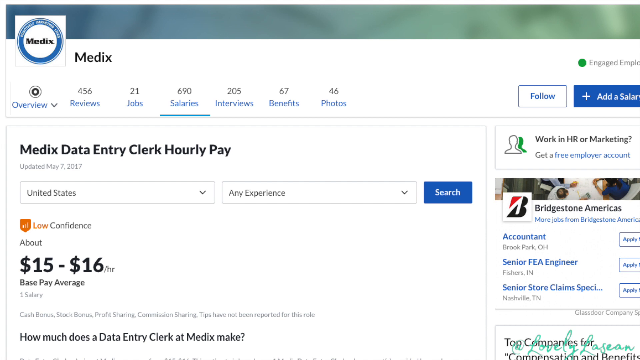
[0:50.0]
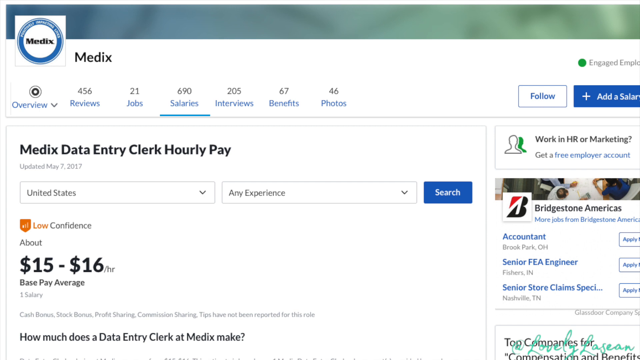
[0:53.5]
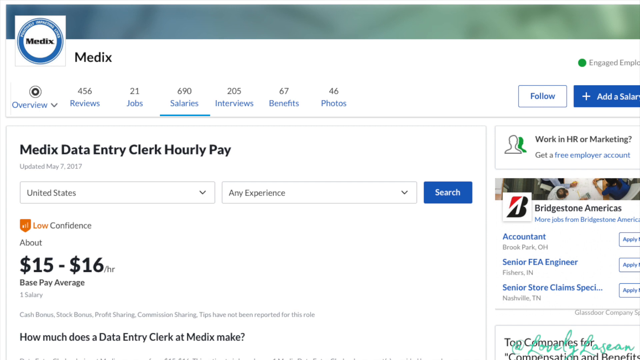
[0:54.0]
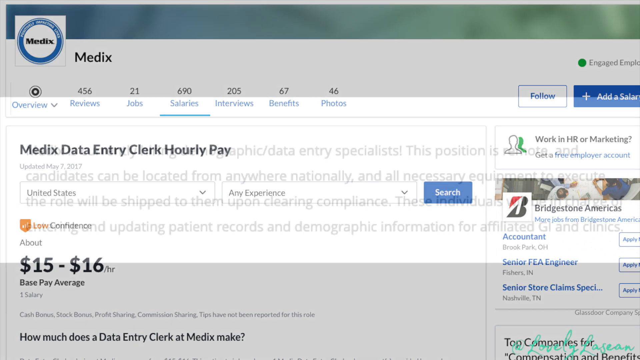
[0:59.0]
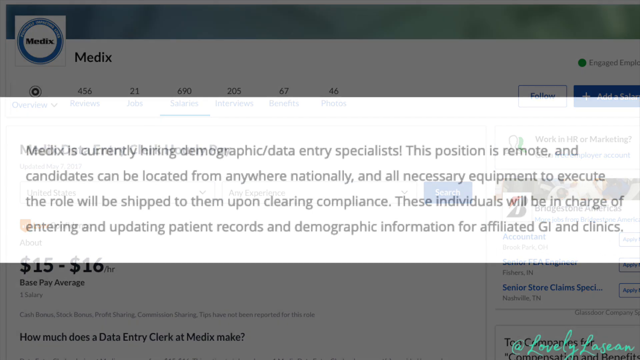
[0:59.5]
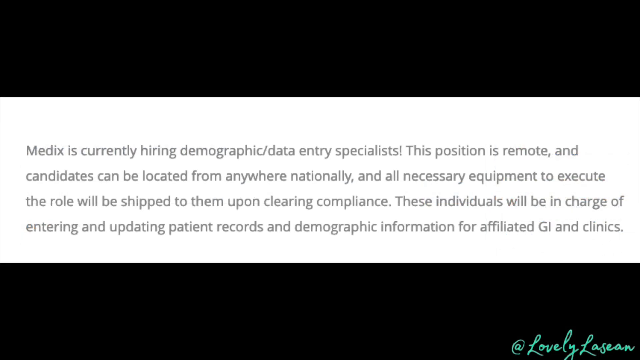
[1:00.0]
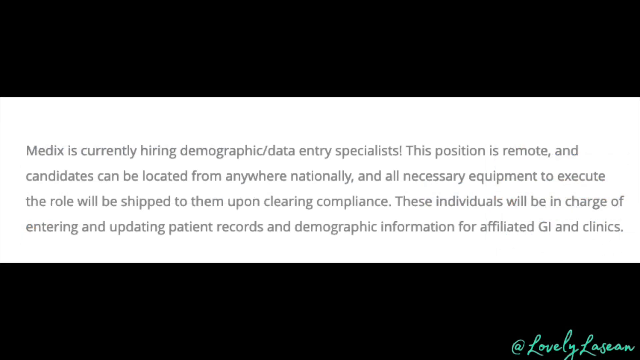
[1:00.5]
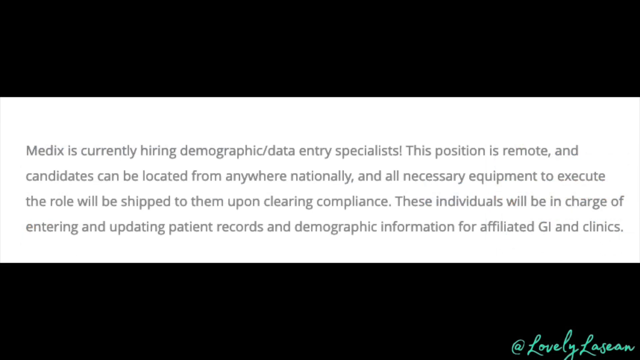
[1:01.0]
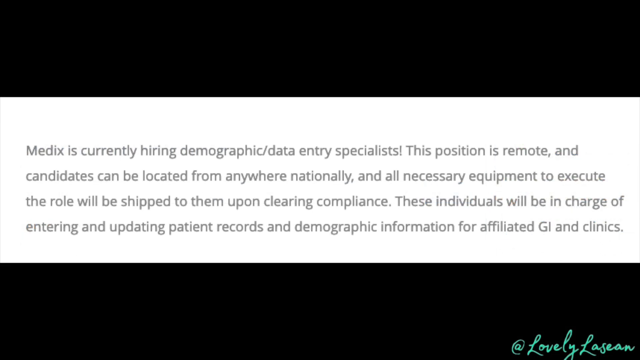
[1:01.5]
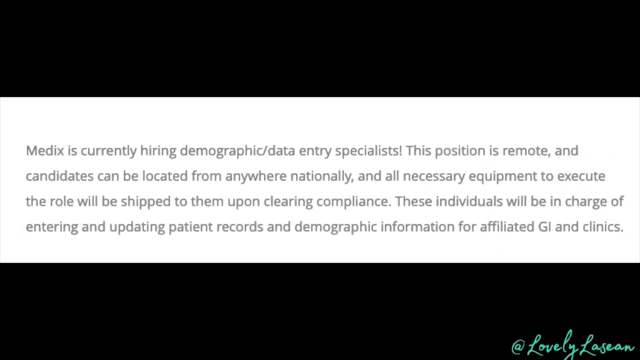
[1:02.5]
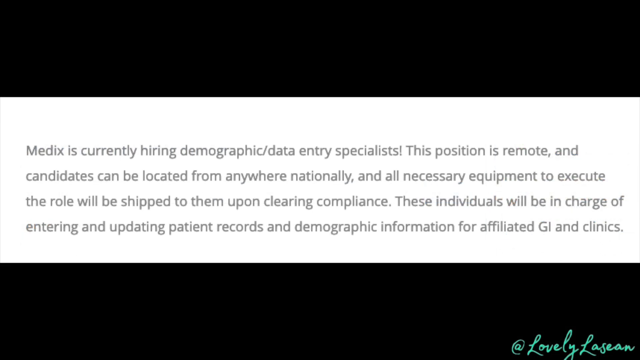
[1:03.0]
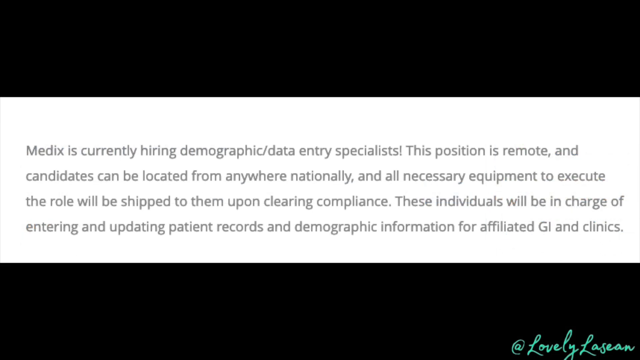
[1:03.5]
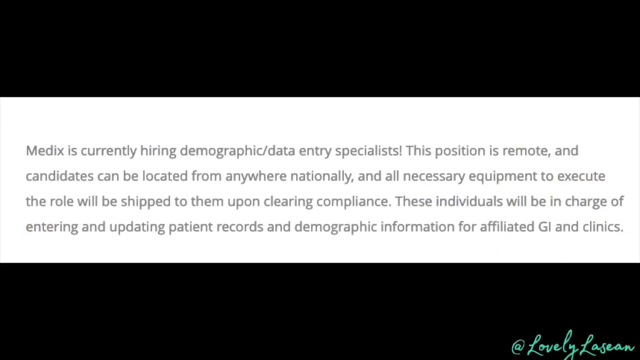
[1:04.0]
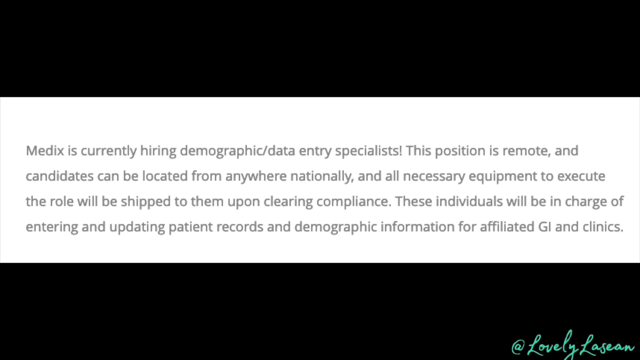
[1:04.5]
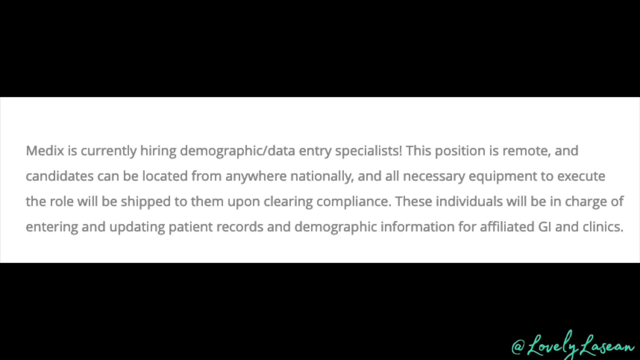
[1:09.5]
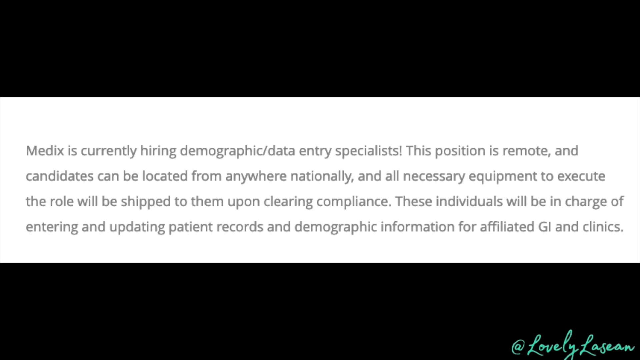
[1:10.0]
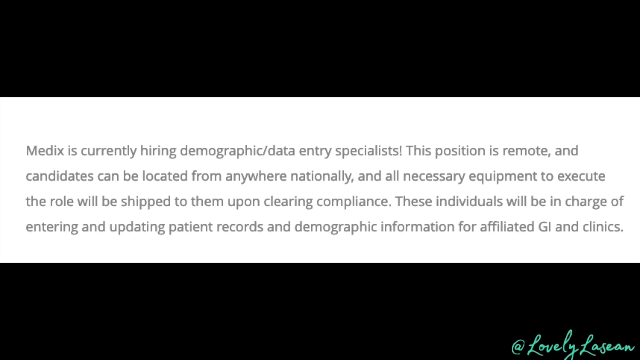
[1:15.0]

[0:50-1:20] The end of the pay page showing the income that could be made is still visible, then the view moves to what appears to be a brief summary of the company and what is required. The text describes hiring a demographic data entry specialist, and states that the position is remote and candidates can be located from anywhere nationally. It also says "all necessary equipment to execute the role will be shipped to them" and "These individuals will be in charge of entering and updating patient records and demographic information for affiliated GIs in clinics."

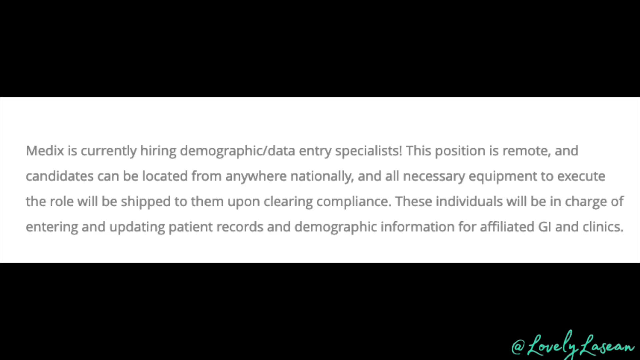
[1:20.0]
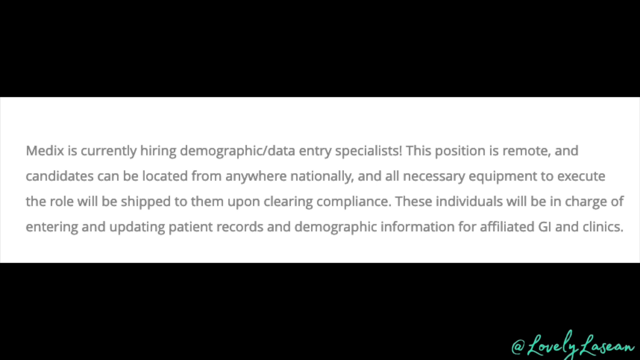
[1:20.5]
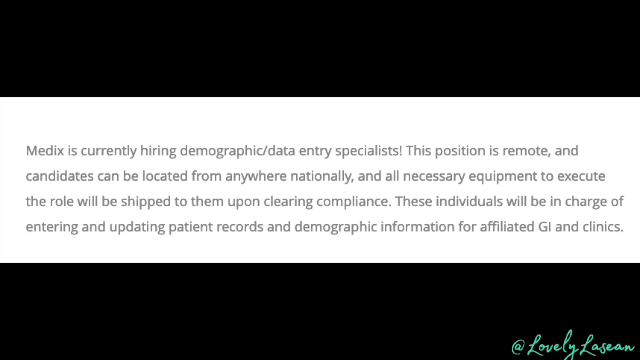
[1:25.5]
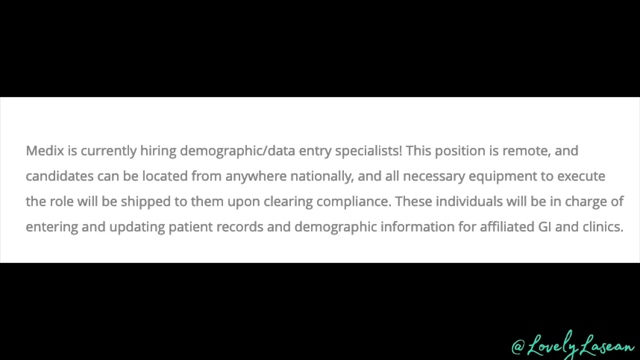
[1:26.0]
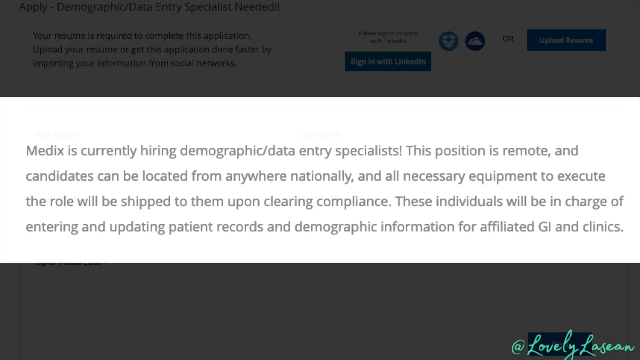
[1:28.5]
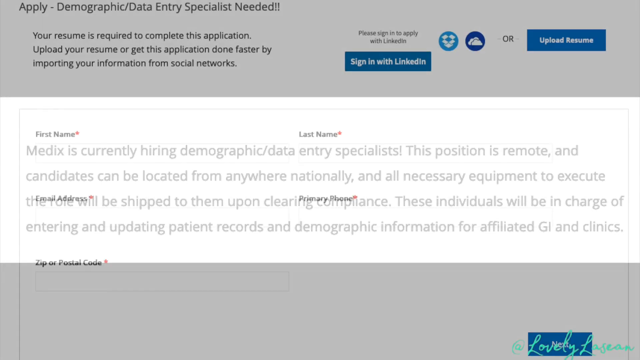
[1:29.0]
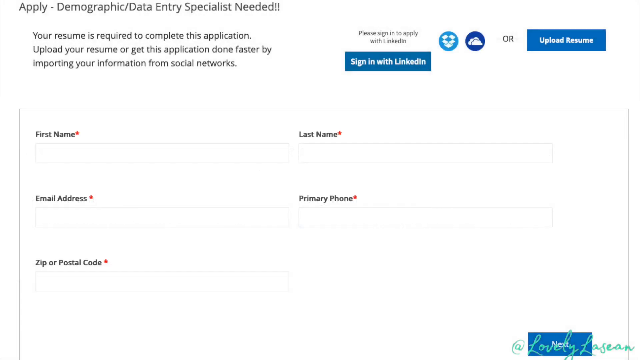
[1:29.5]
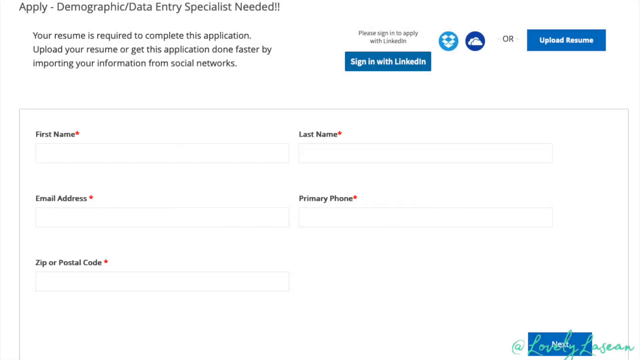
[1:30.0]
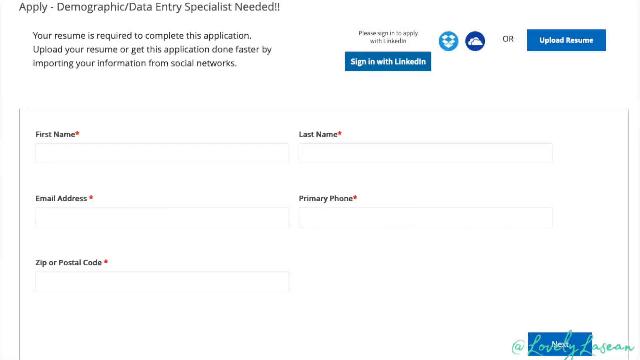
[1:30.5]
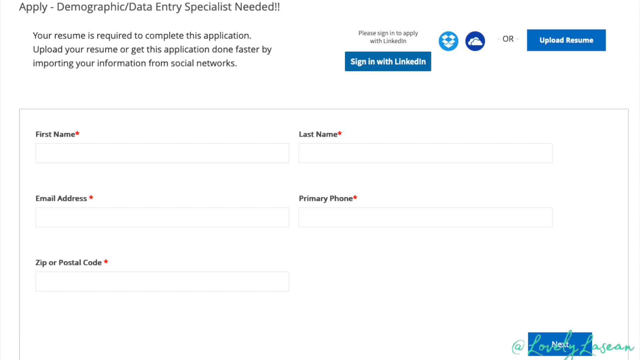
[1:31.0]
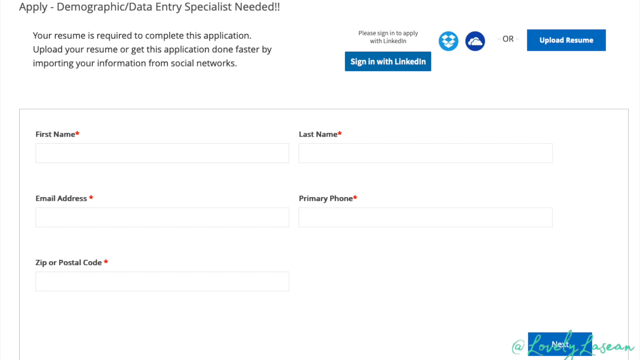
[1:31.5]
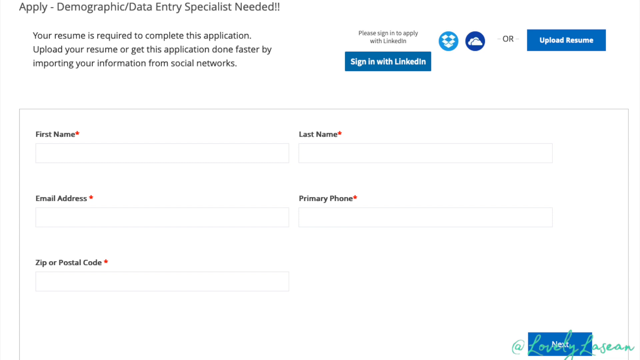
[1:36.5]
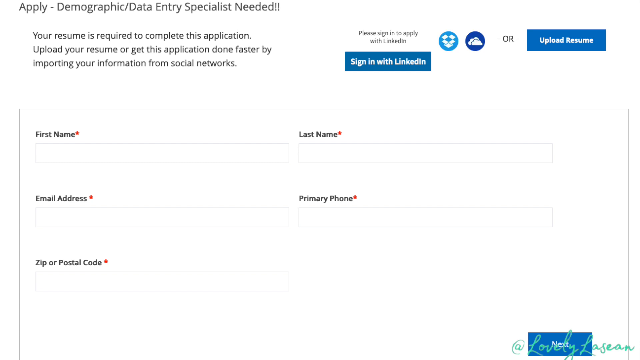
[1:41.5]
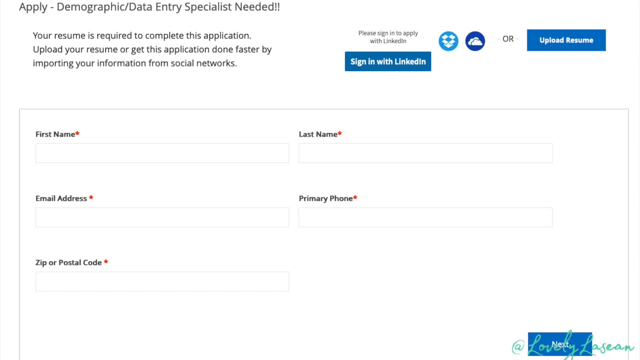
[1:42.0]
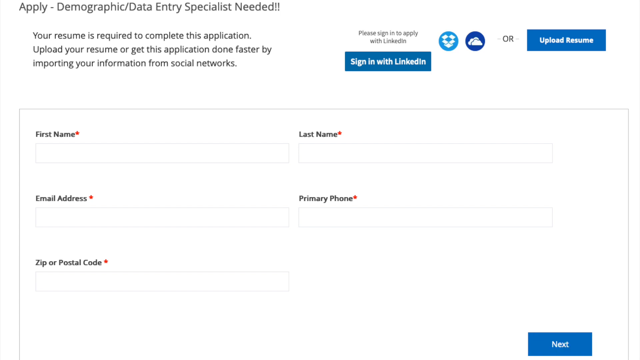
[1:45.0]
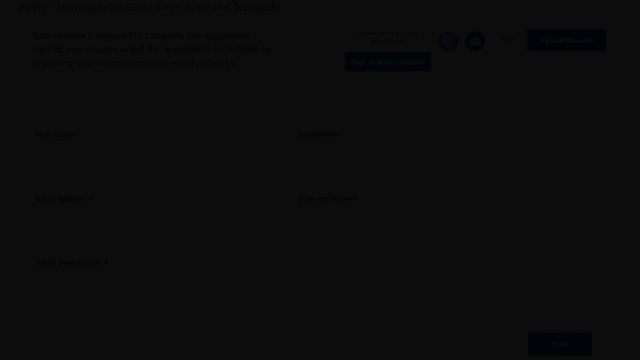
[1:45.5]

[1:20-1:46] The end of the previous page is visible, then the camera slowly pans across a different page of the website about entering demographic information. It is a sign-in form with fields for first name, last name, email address, primary phone number, and zip or postal code. At the top there is an option to sign in with LinkedIn, and there is also an option to upload a CV or resume. The site seems to be some kind of place to find work, apparently remote work.